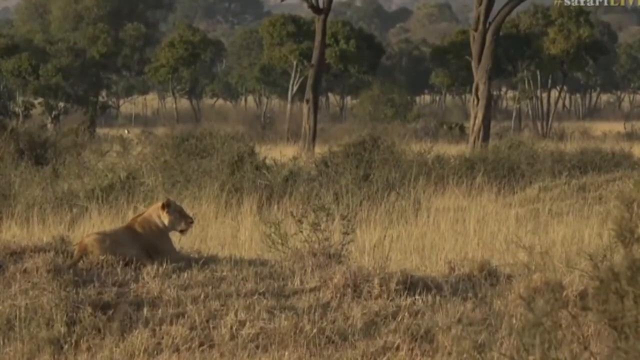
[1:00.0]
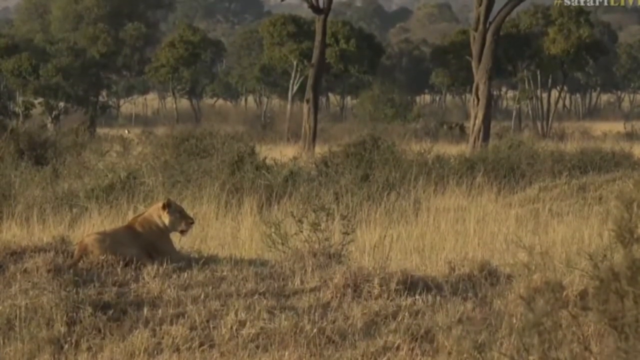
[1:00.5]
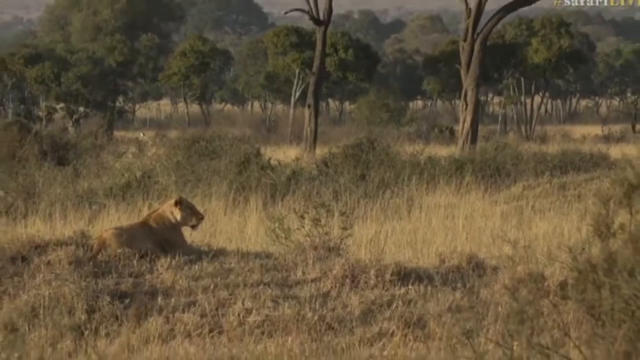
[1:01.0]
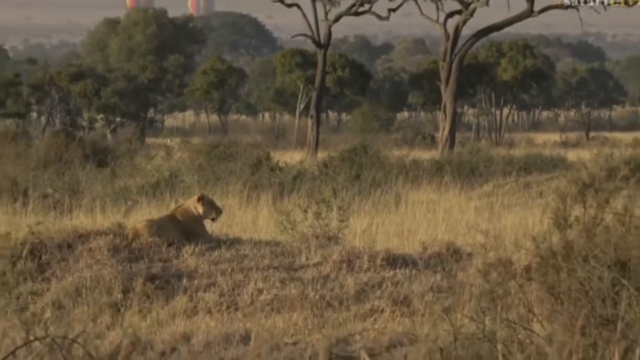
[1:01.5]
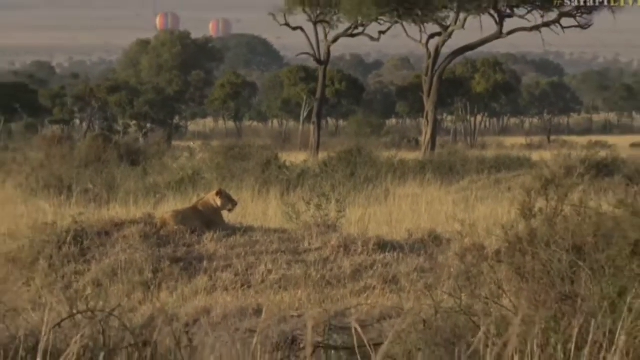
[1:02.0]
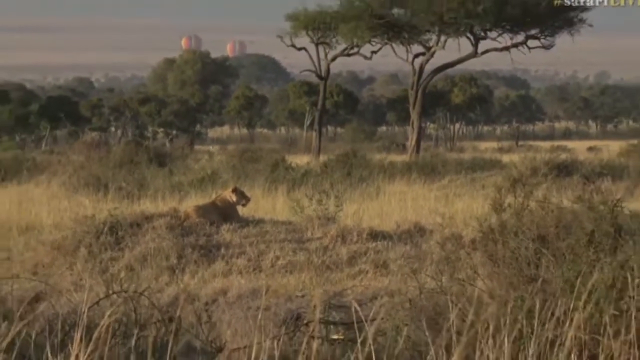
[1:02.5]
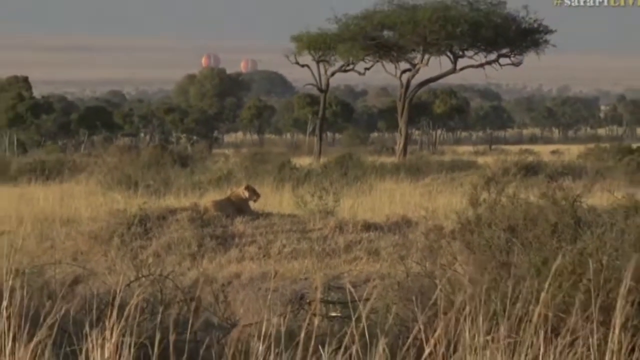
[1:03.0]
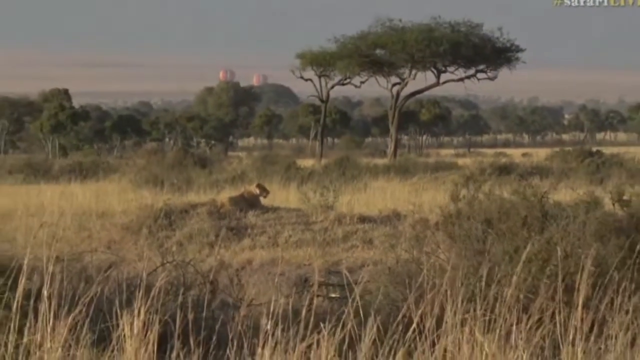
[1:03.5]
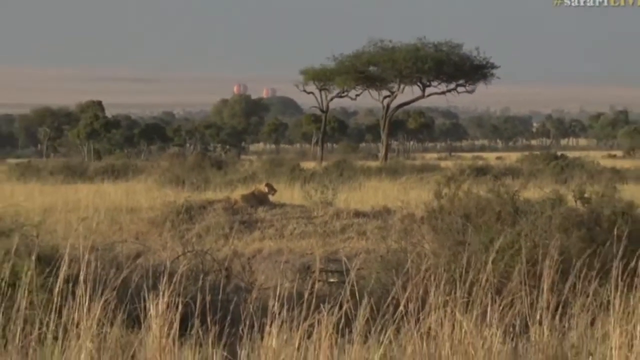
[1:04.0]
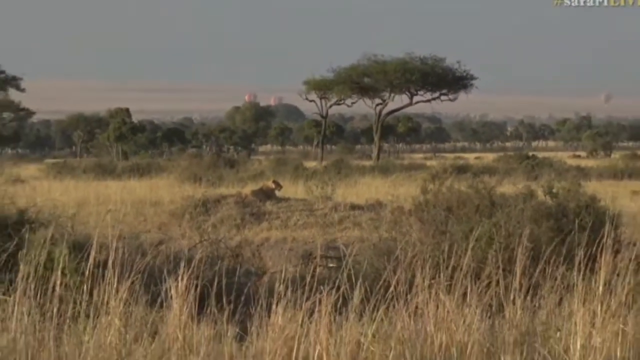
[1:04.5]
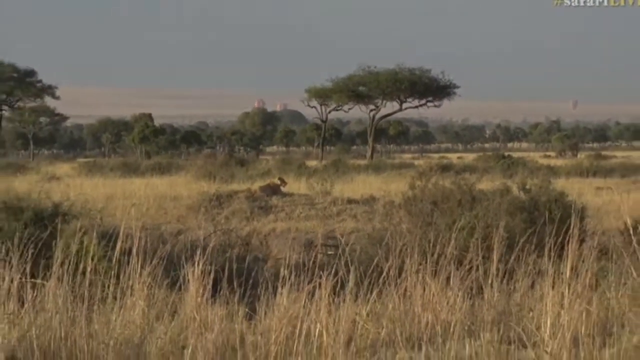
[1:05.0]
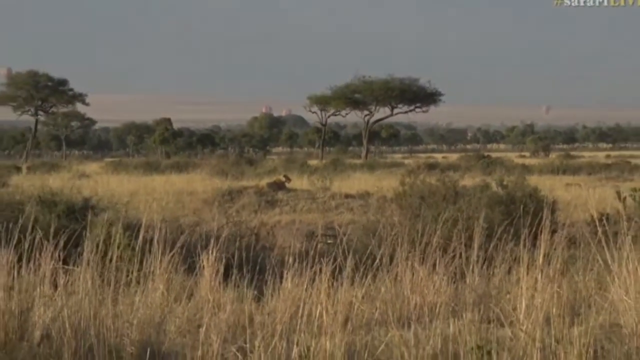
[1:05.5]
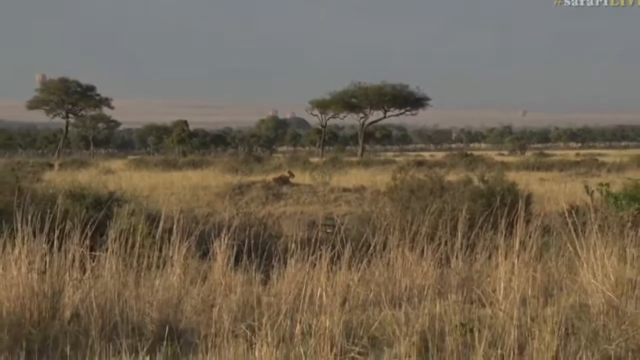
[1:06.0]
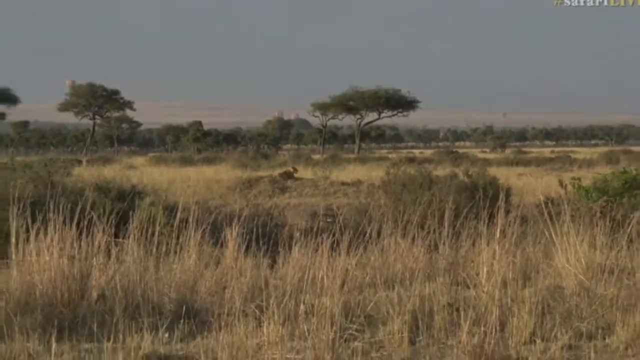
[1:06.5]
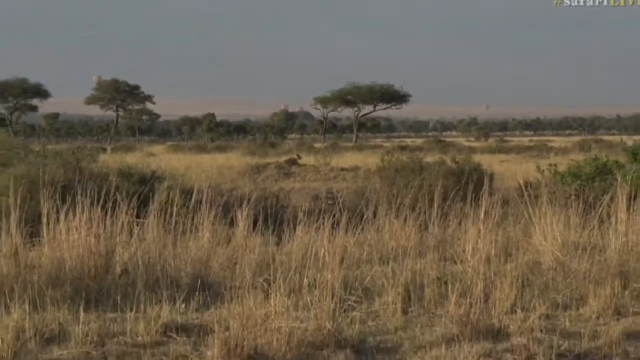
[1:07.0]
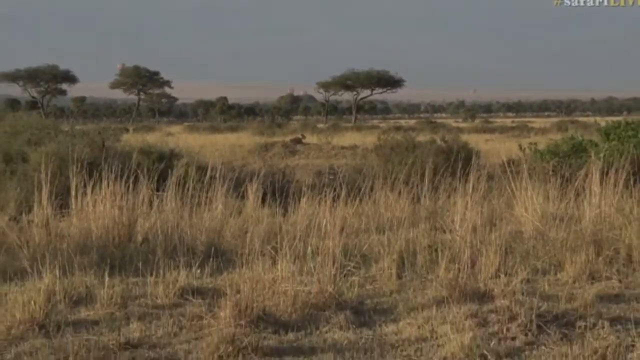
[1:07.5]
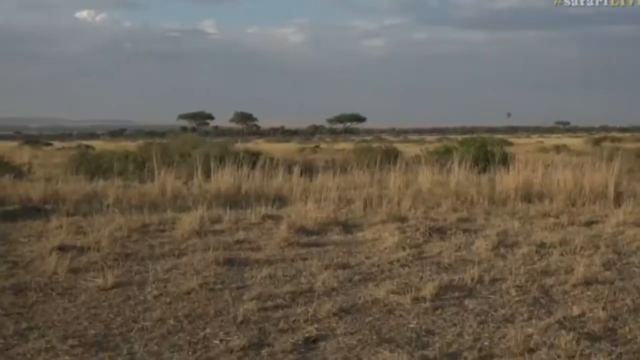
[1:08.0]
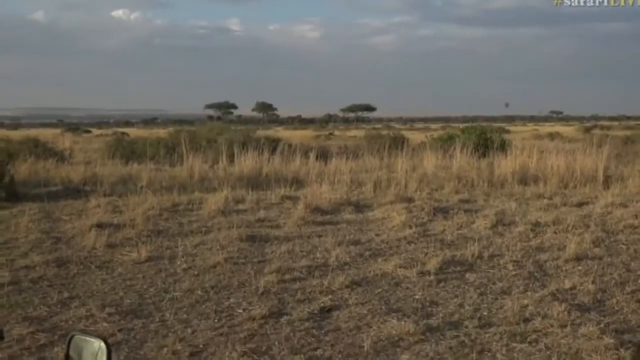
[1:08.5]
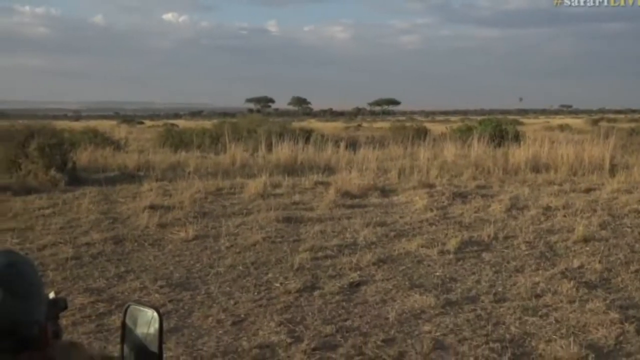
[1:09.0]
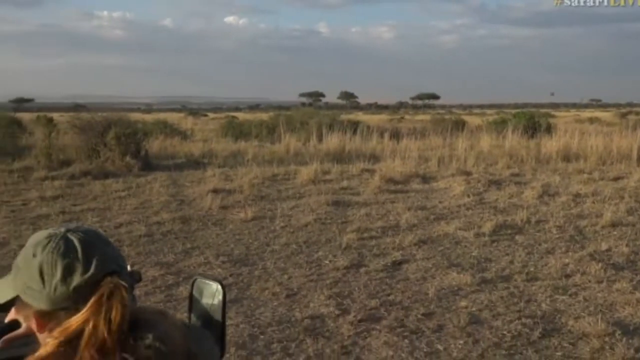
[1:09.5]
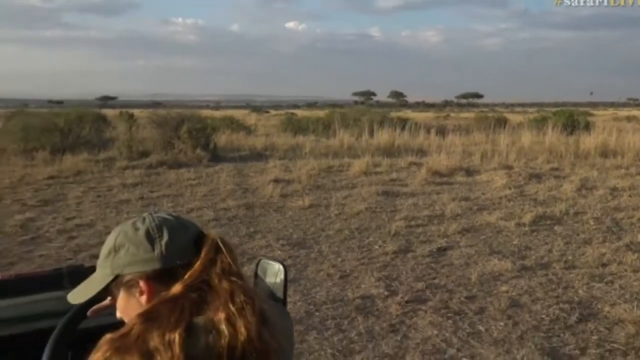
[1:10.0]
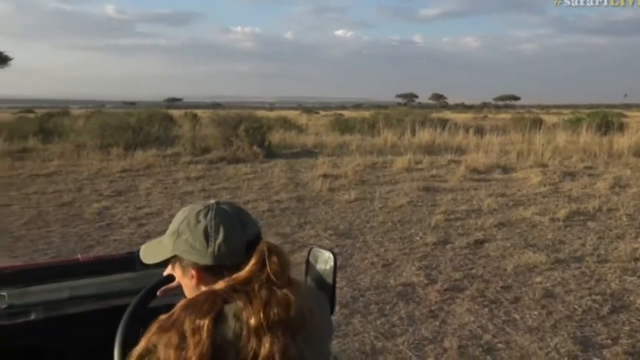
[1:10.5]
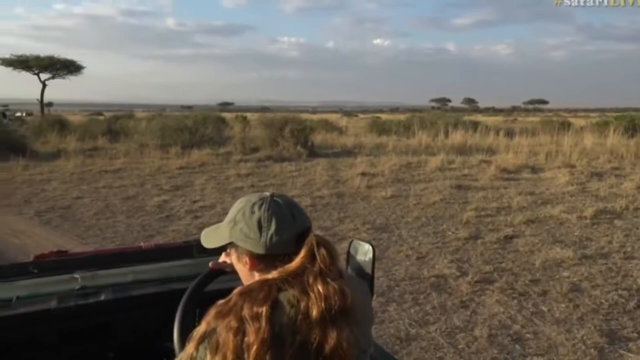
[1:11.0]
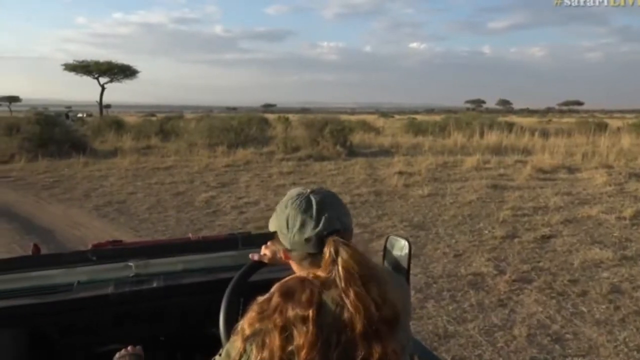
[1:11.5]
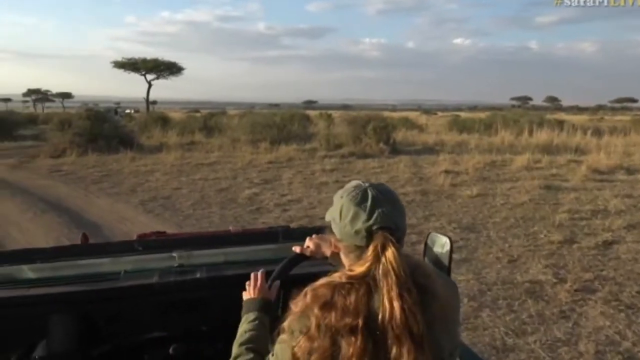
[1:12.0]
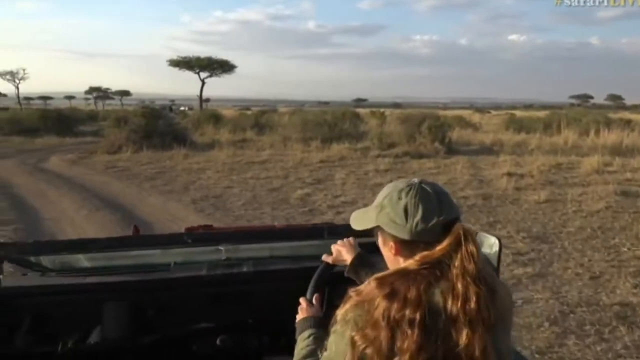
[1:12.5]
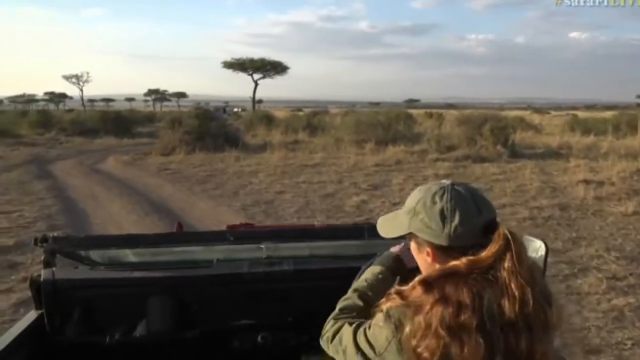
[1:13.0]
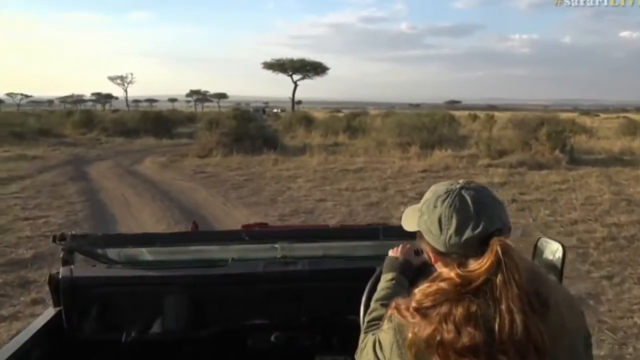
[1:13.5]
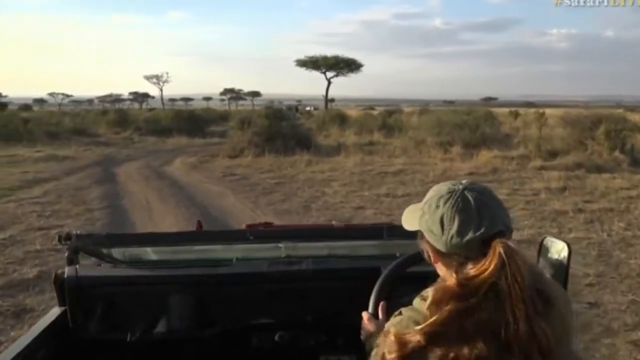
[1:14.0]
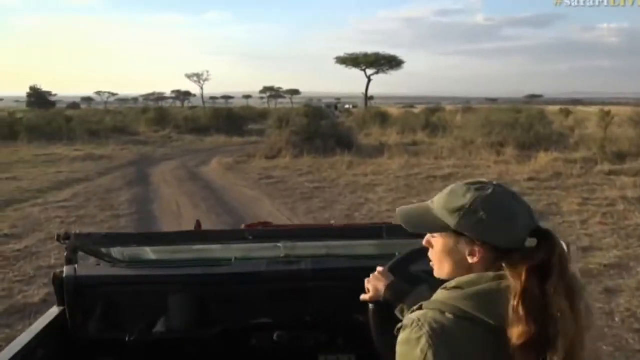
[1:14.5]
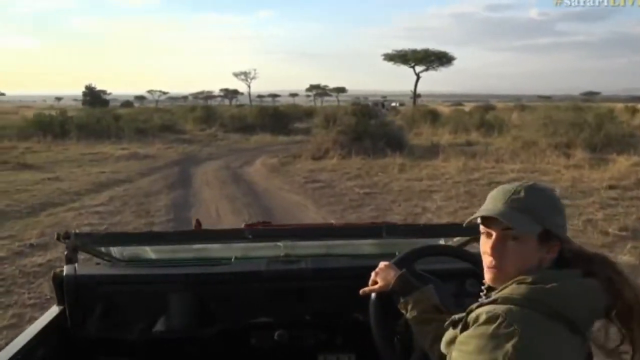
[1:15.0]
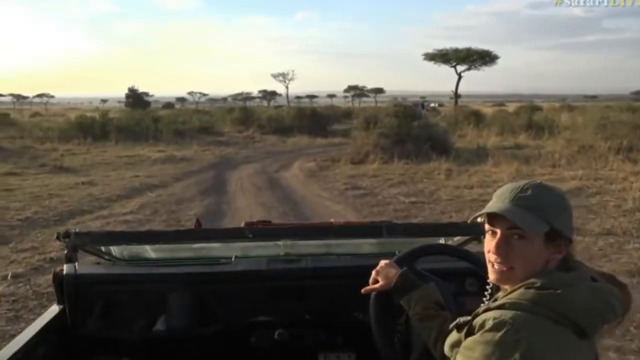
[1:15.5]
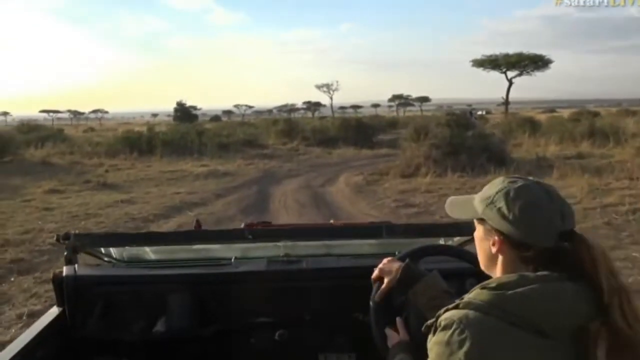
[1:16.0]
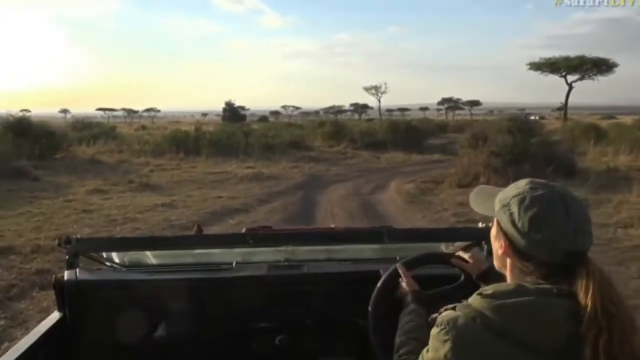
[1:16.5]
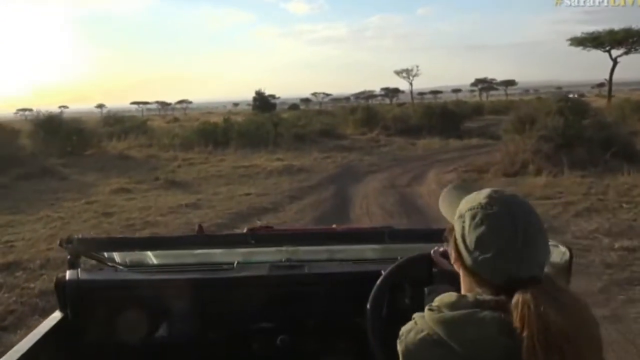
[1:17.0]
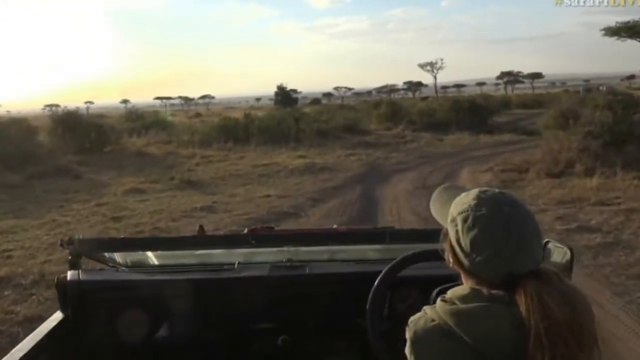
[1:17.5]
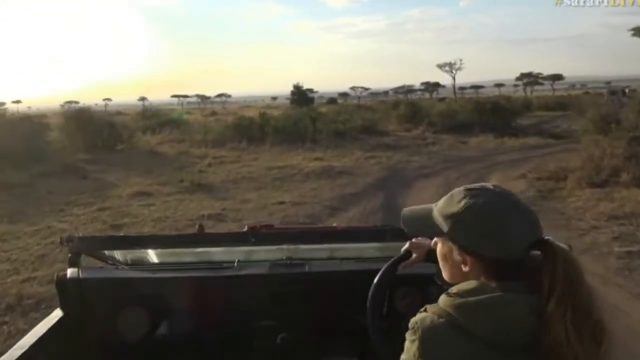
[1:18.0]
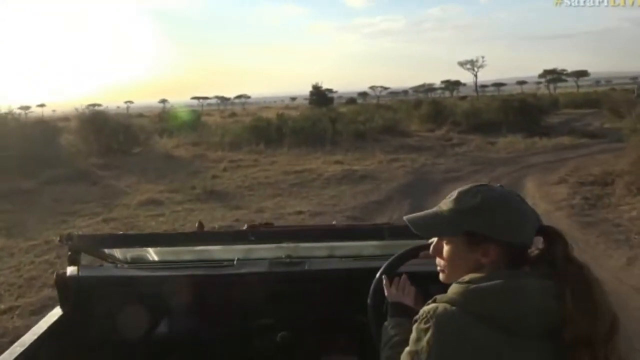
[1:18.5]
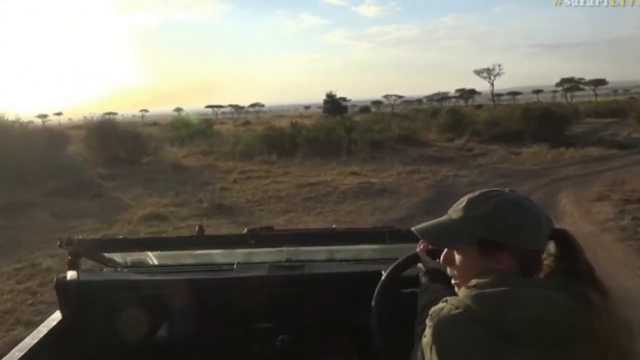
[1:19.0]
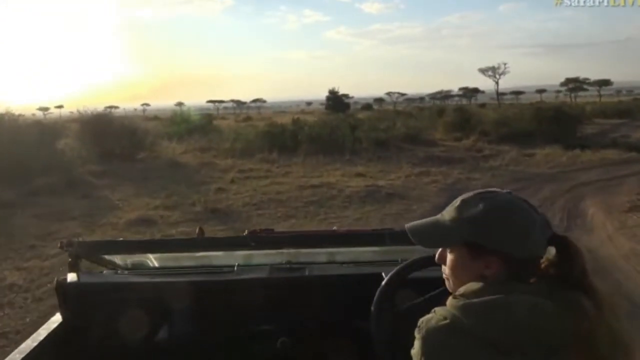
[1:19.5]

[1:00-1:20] The shot begins with a close-up of a lioness, then the camera pans all the way back to a very wide view of the expansive land surrounding her. The sky is a very pale blue and the clouds are like one big sheet. On the horizon there appears to be a forest, and there are plenty of trees. Everything is dry and it looks hot; the grass, weeds and brush are all dried out. The lion is on the mound of earth, scanning. The scene then transitions to a woman driving a Jeep with no top along a dirt road. In the distance the horizon is full of trees, and her immediate surroundings are dry brush and weeds, plus trees with long trunks and flat, wide tops with no arch. She looks back at the camera as she drives toward the setting sun.